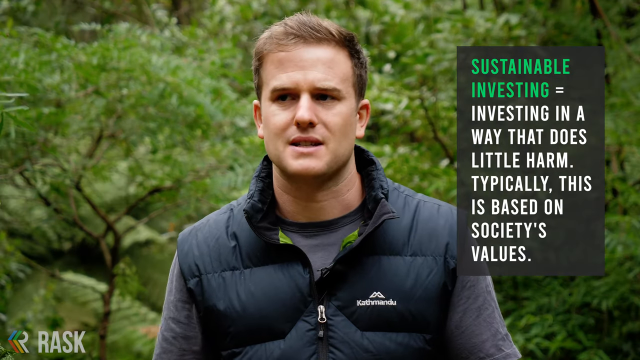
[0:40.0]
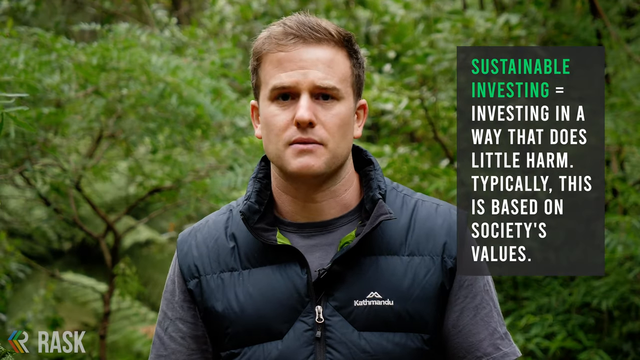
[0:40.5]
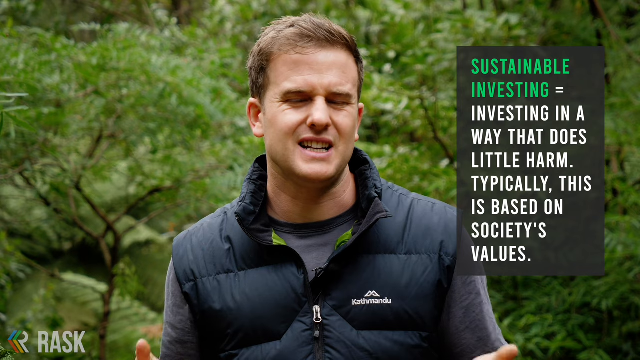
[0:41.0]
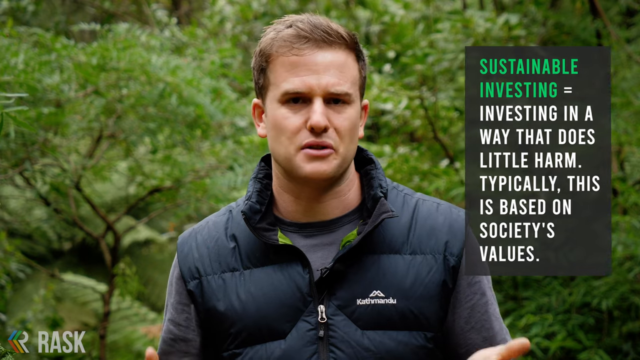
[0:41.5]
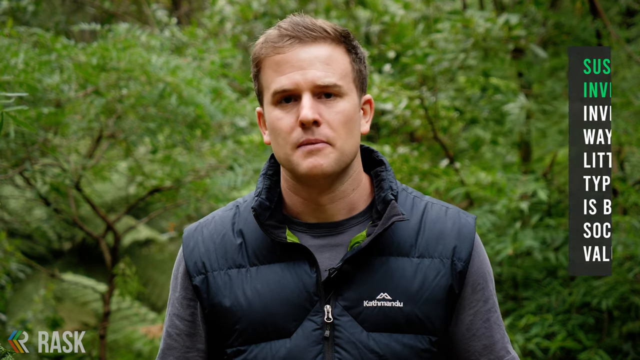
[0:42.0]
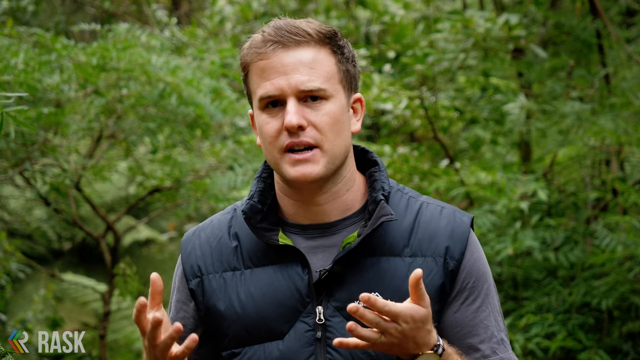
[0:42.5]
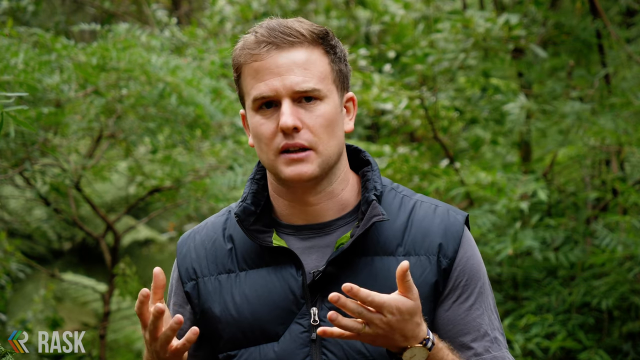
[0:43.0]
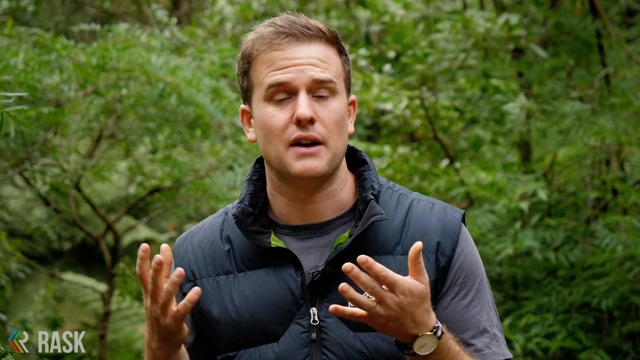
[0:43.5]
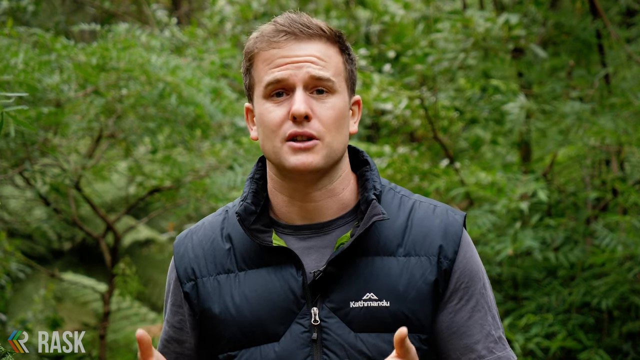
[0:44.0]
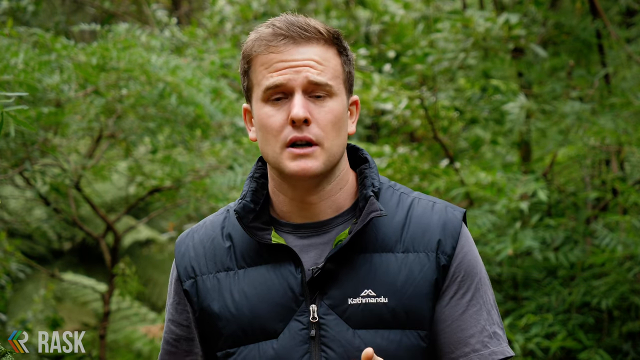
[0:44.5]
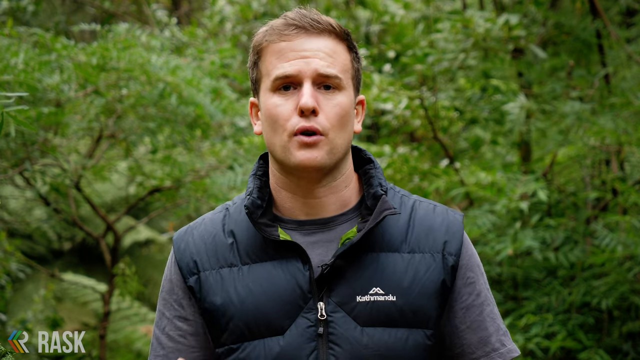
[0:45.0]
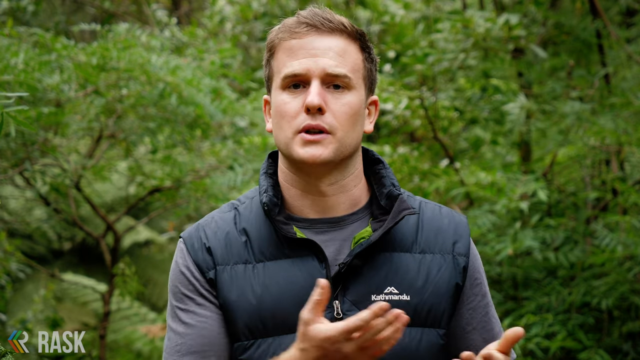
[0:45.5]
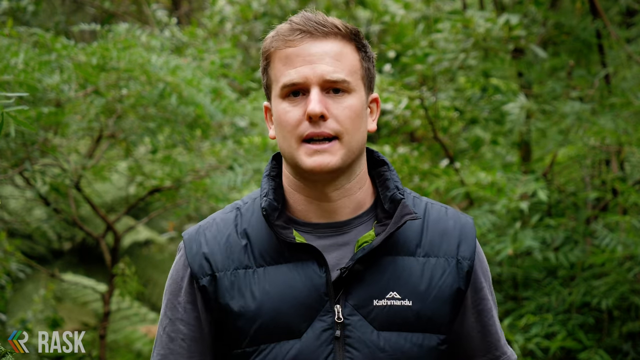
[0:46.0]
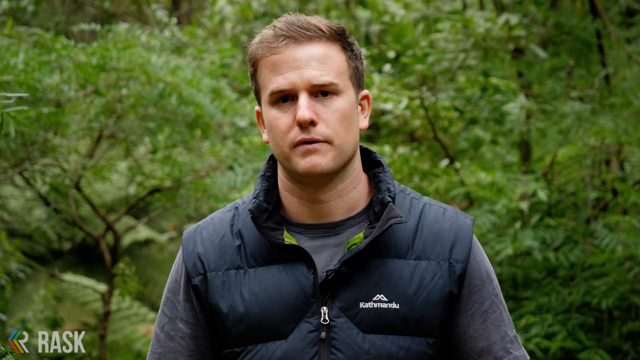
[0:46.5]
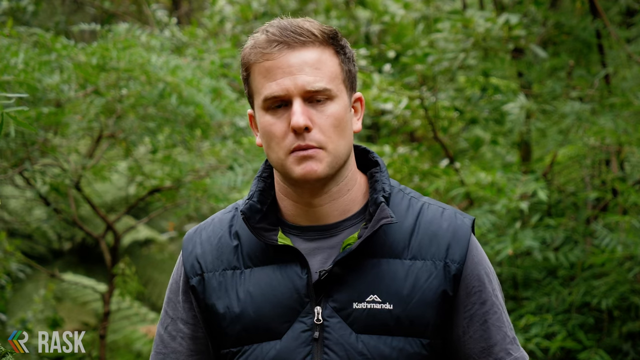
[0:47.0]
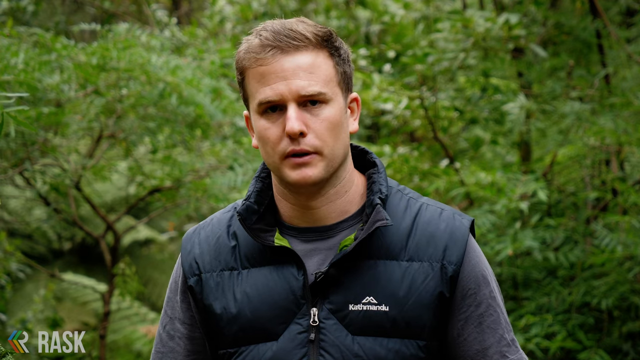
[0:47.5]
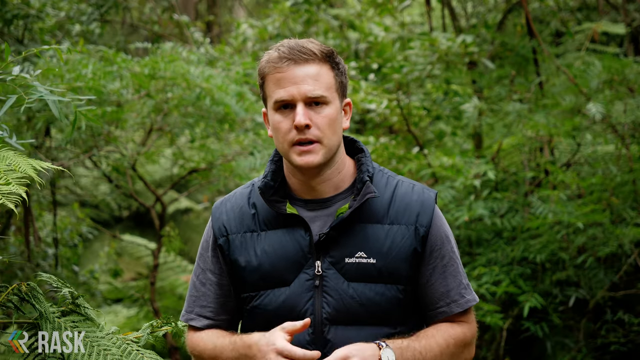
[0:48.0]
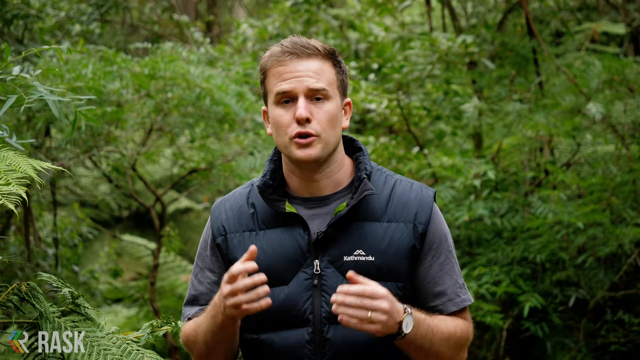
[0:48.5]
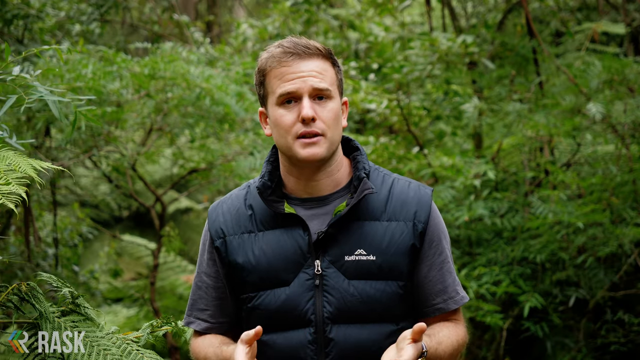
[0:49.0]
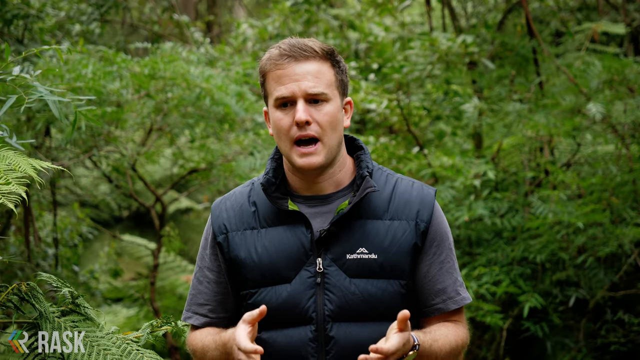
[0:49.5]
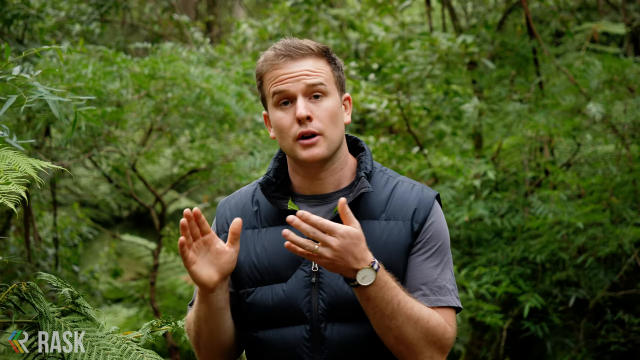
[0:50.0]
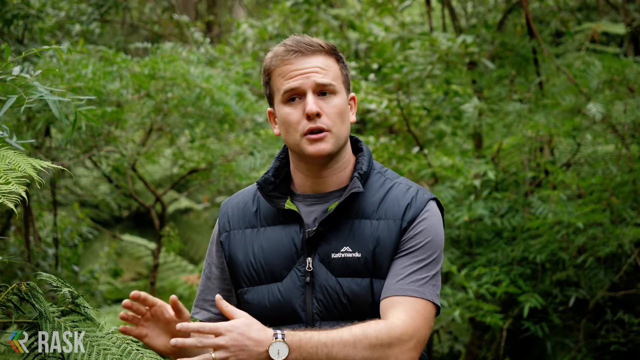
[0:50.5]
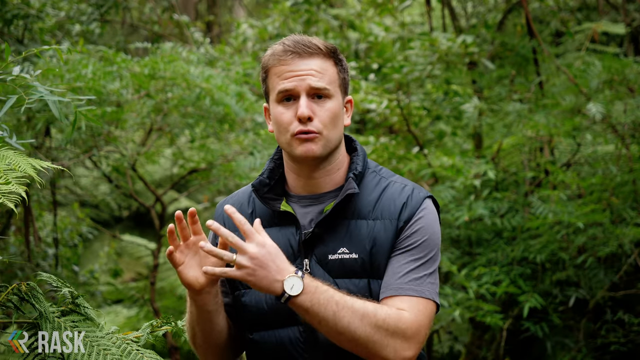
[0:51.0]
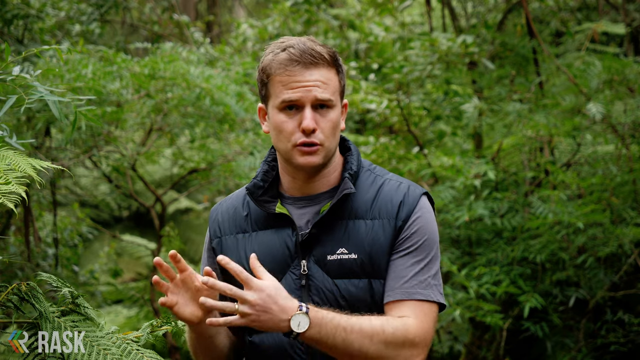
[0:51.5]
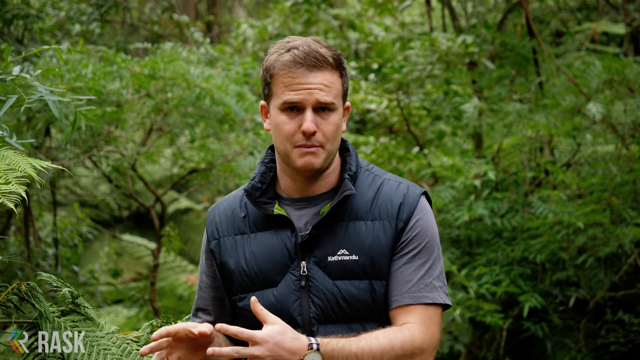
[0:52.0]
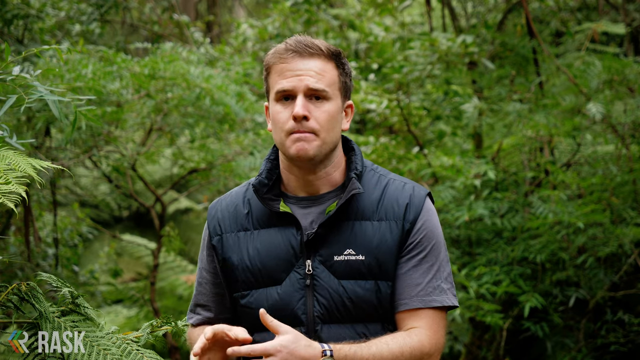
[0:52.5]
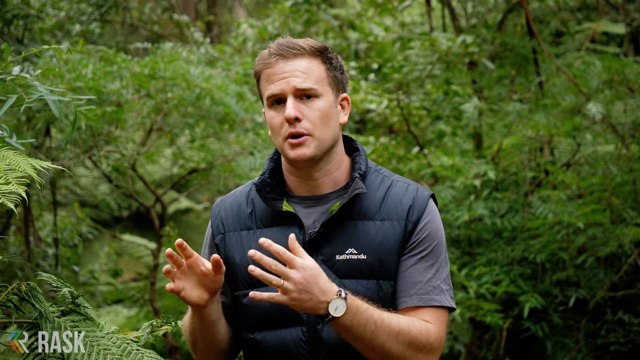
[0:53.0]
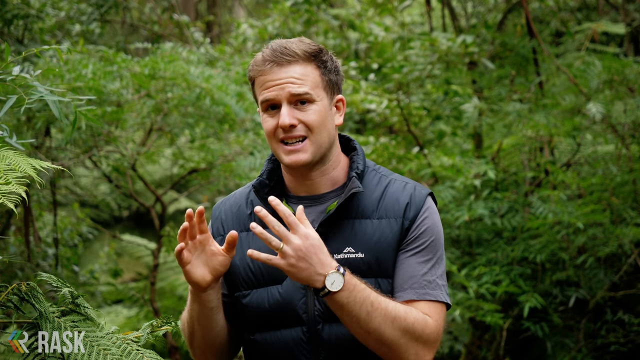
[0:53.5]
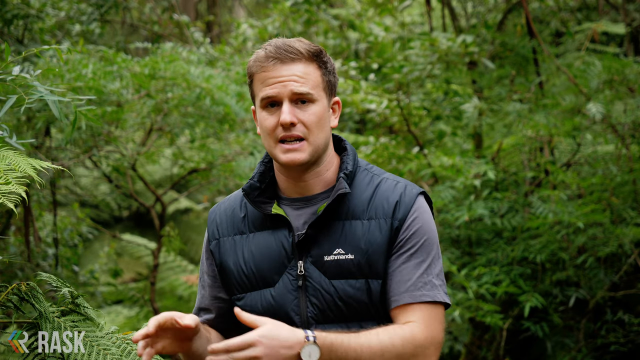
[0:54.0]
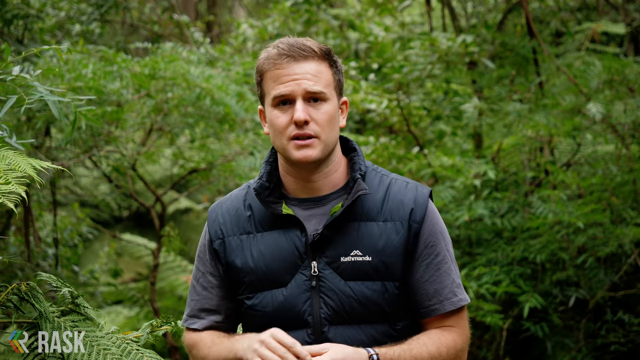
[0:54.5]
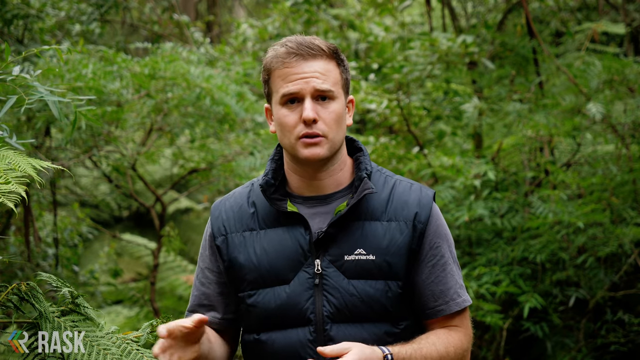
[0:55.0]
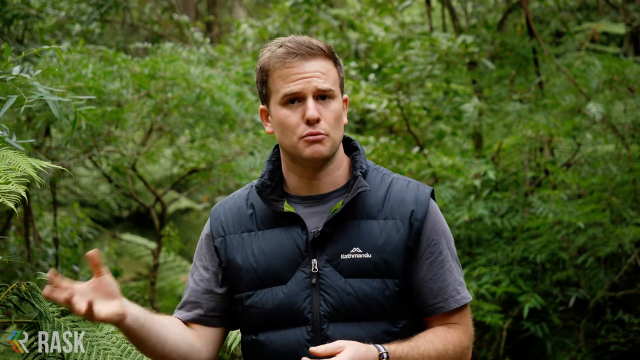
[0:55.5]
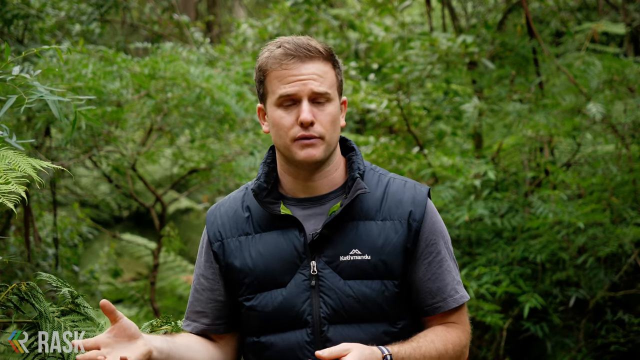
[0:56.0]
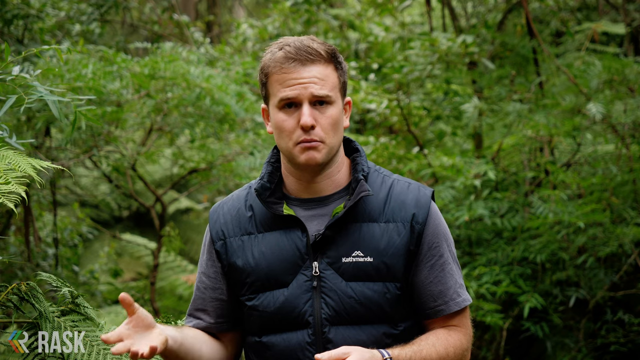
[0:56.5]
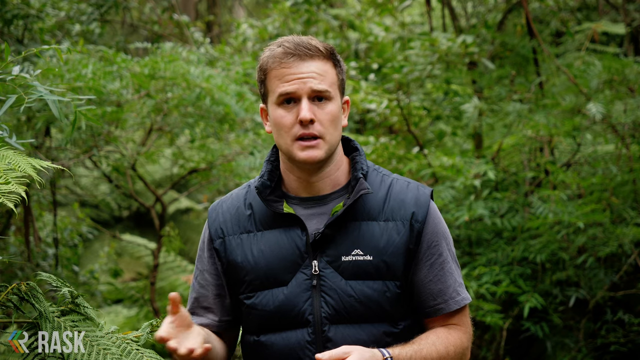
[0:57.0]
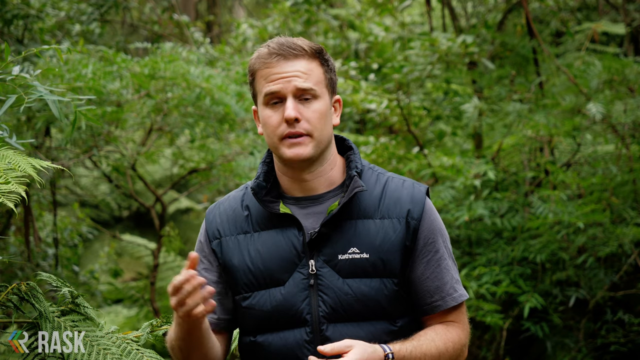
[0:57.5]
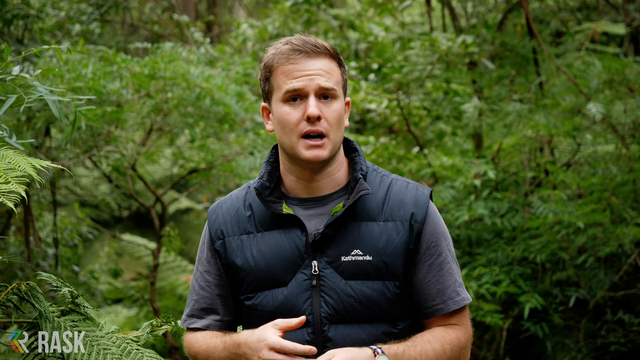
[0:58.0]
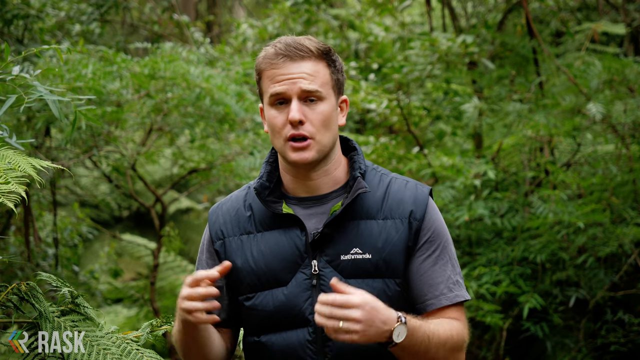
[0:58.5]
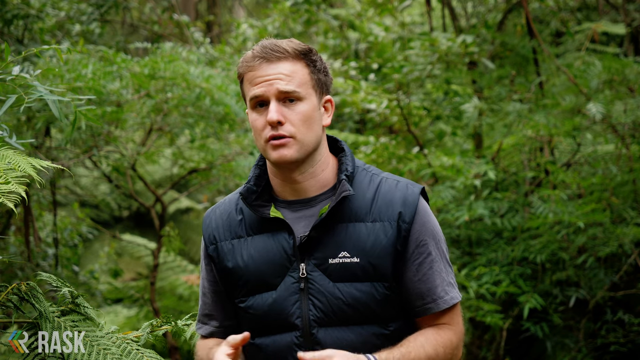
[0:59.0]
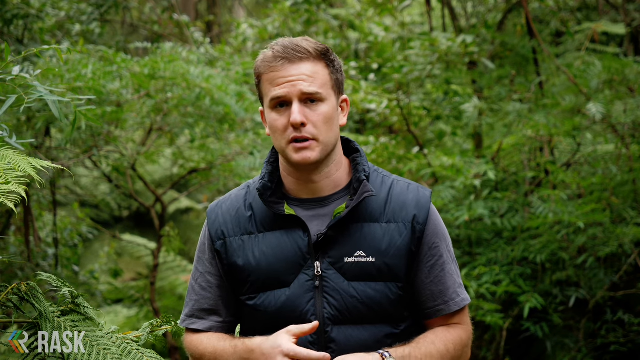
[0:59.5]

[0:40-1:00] The man, who wears a ring and a wristwatch, gestures with his hands, uses his right hand to make a point, and claps his two hands together. He is a young man with short hair, wearing a jacket, and his facial expression shows passion for what he is explaining. He looks like a financial advisor. He wears a sweater, a short cardigan, and is in the bush.